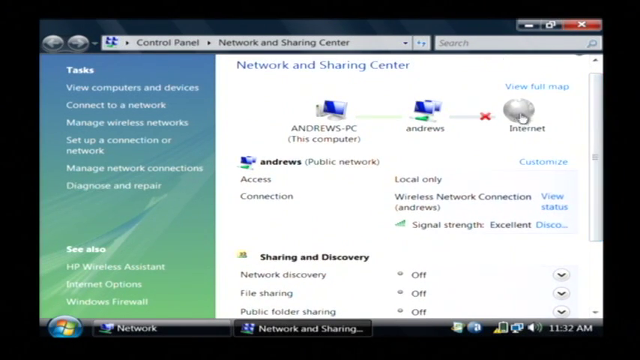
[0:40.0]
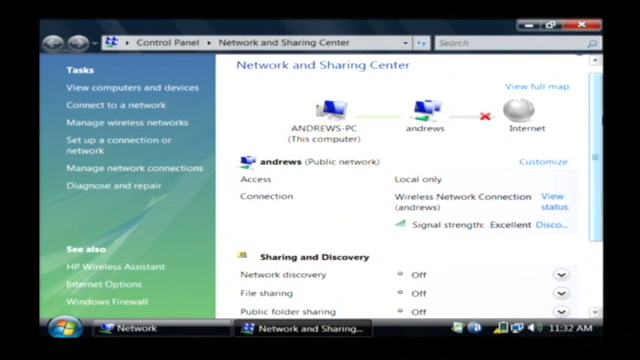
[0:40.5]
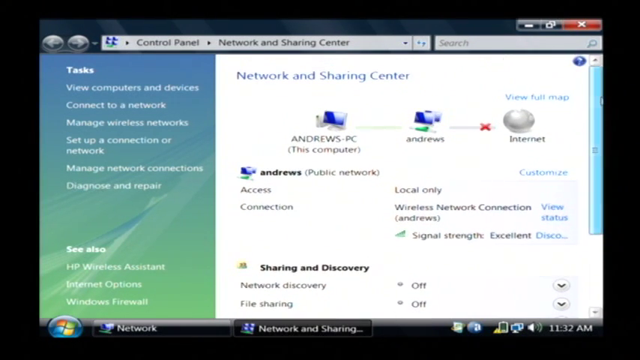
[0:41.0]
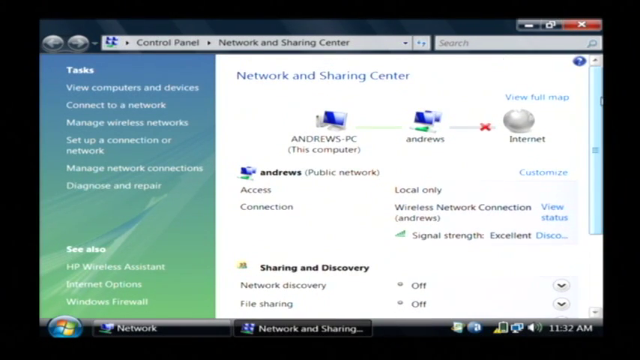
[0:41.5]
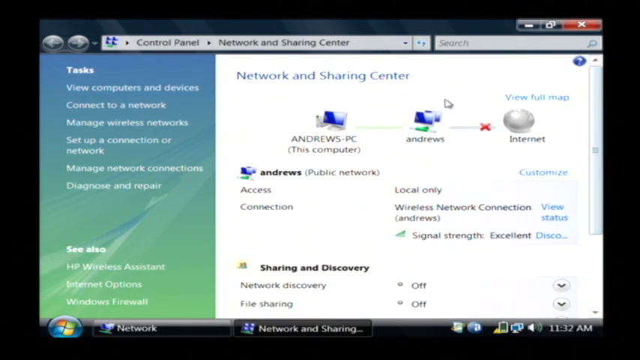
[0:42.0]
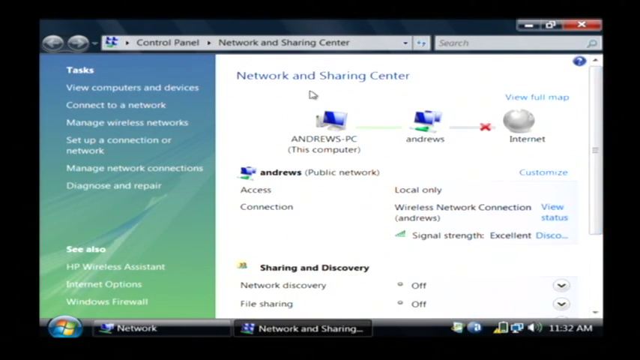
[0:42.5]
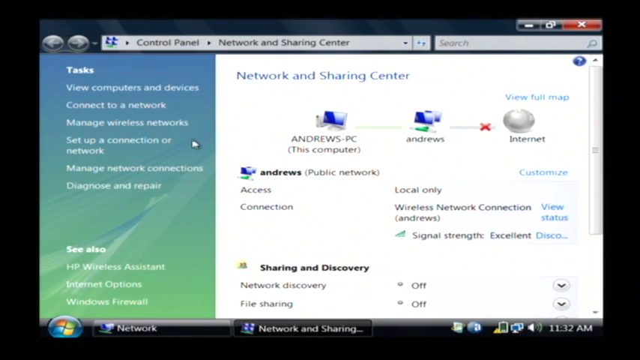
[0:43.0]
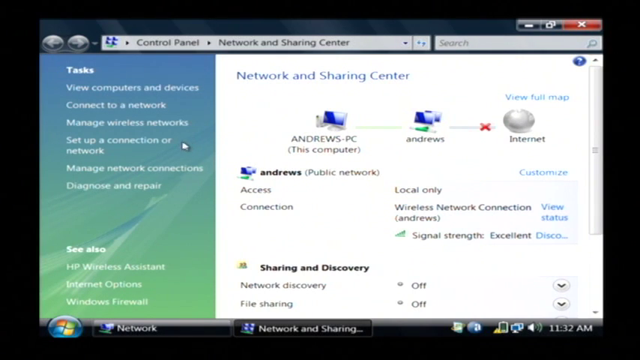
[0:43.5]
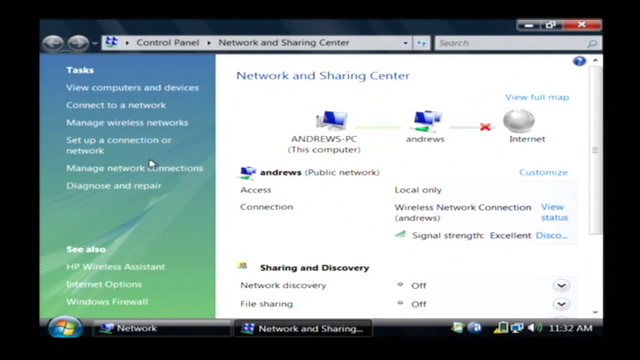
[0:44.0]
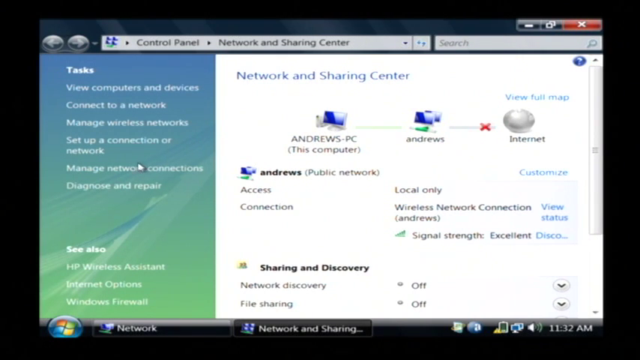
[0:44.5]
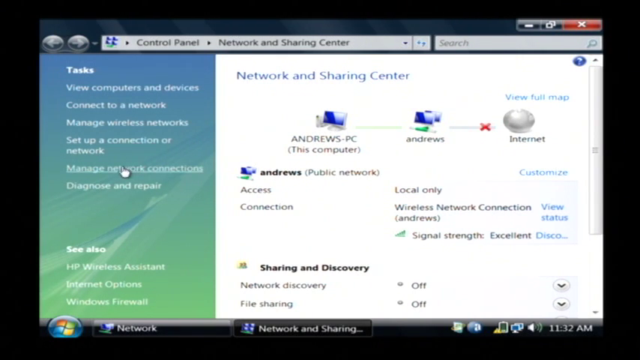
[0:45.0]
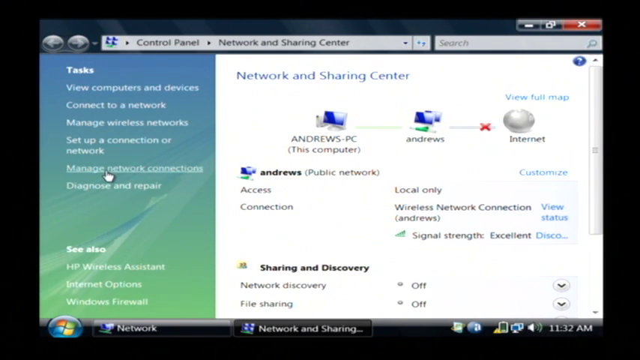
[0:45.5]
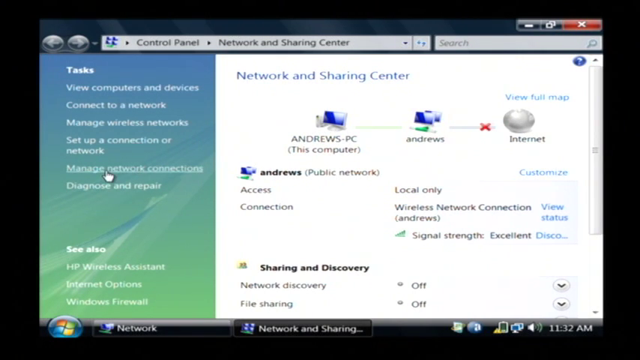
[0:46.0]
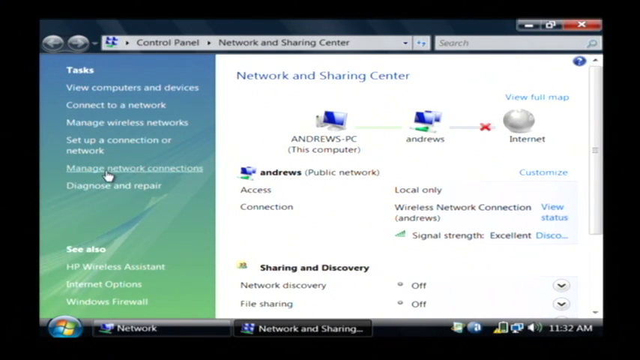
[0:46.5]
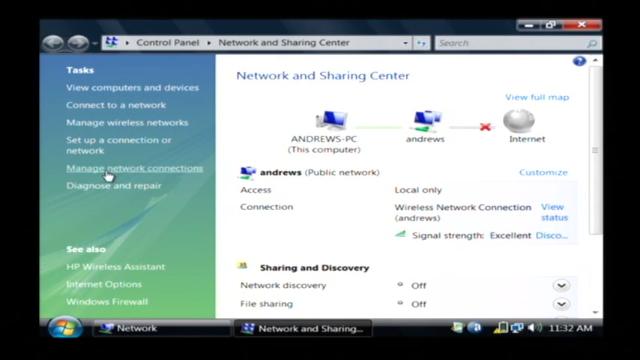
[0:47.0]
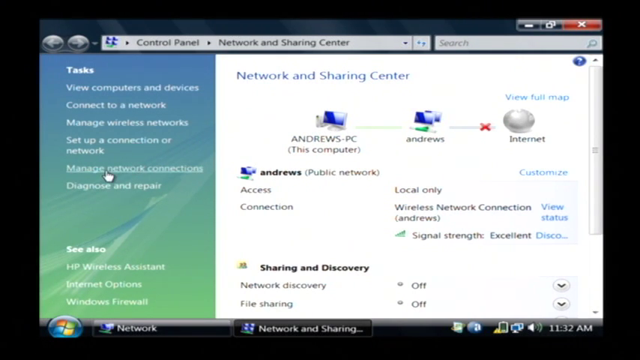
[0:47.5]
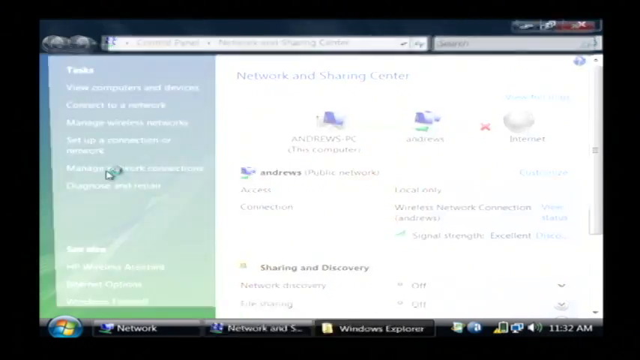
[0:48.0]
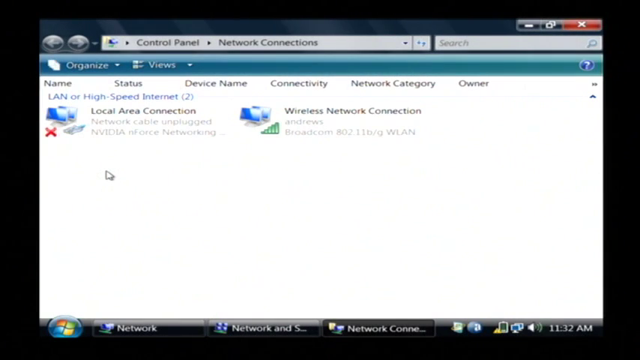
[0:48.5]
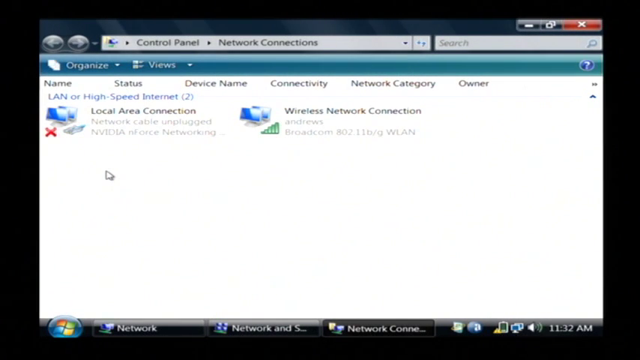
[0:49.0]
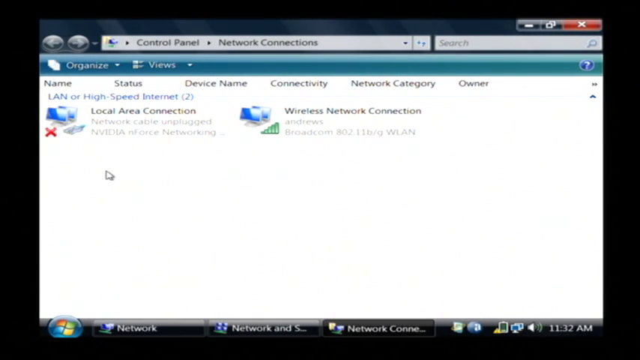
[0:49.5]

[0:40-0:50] The open program window has a dark bar across the top with two arrows, one pointing left and one pointing right, then a bar that reads "control panel", next "network and sharing center", and then a search bar. Below, the screen is divided. One third is a vertical rectangle that starts off blue and fades down to green; its list reads "tasks, new computers and devices, connect to a network, manage wireless networks, set up a connection or network, manage network connections, diagnose and repair", and below that "see also HP wireless assistant, internet options, Windows firewall". The majority of the screen has a white background and reads "network and sharing center" in blue. Below that is a computer icon labeled "Andrews PC, this computer", with a line reaching to two other computers labeled "Andrews", and then a line with a red X in it labeled "internet". The mouse arrow is to the left of this row. Below that it reads "Andrews public network", then "access" and "connection", and staggered, "local only". Below that it reads "wireless network connection view status", then "signal strength, excellent" with a blue "..." next to it. At the bottom it reads "sharing and discovery", then "network discovery off" with an arrow icon and "file sharing off" with an arrow icon. The mouse scrolls over to manage network connections and clicks, and the screen changes.